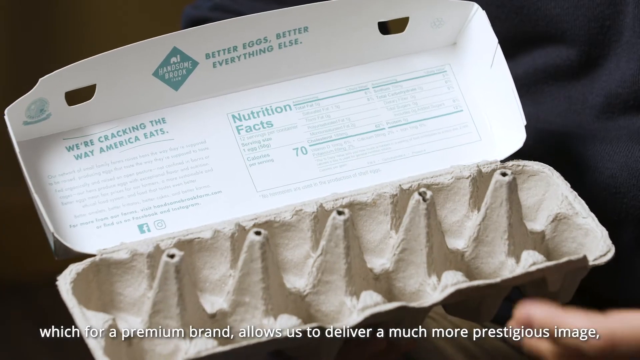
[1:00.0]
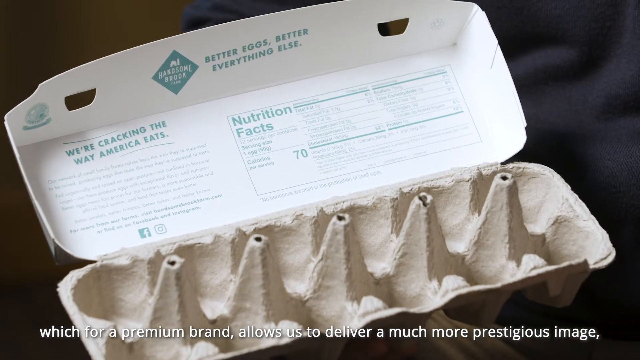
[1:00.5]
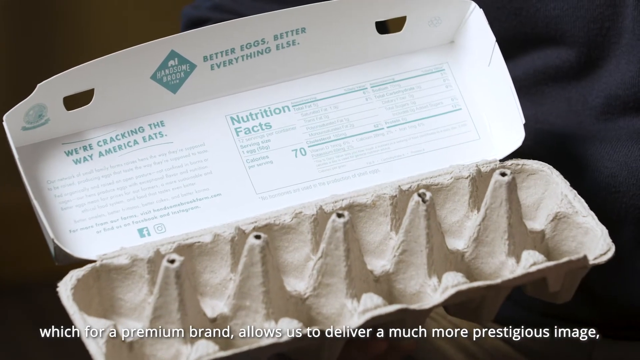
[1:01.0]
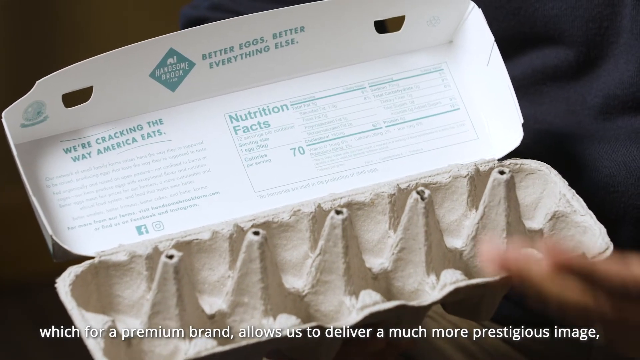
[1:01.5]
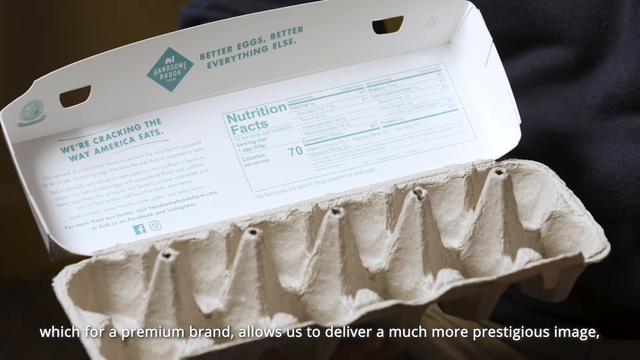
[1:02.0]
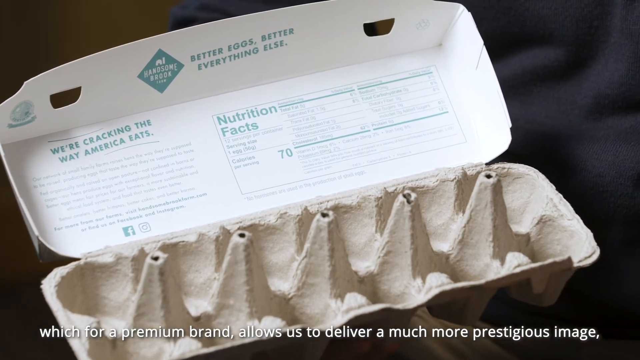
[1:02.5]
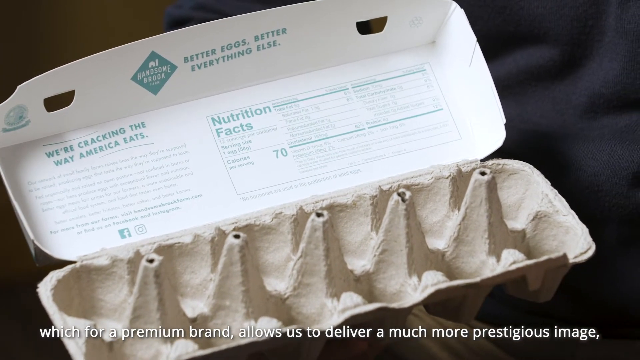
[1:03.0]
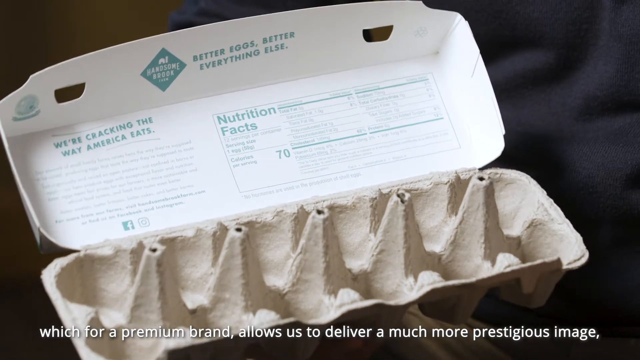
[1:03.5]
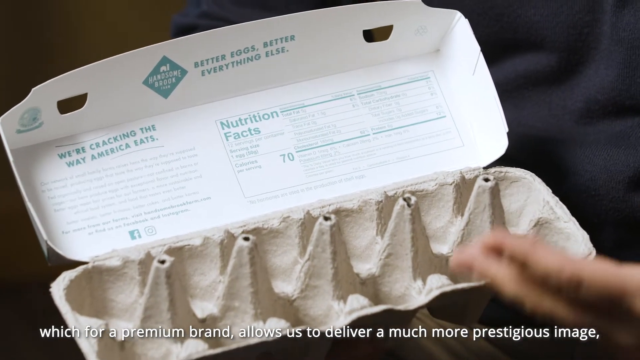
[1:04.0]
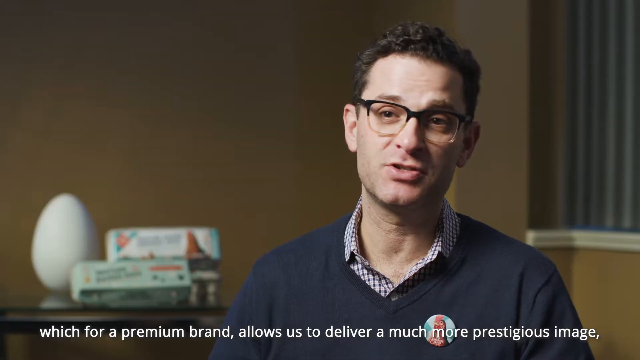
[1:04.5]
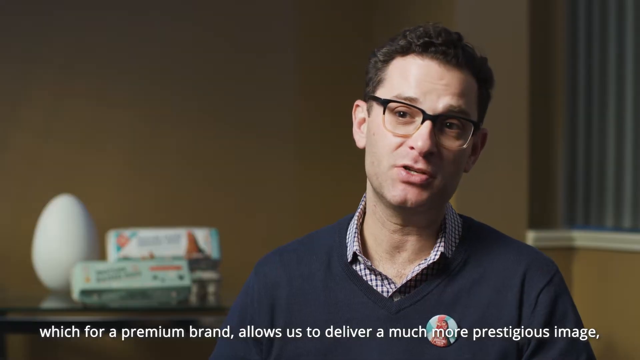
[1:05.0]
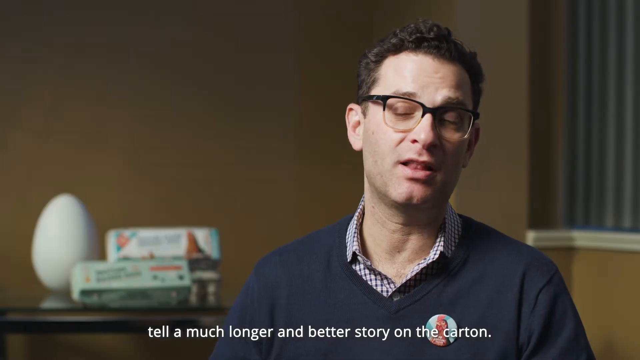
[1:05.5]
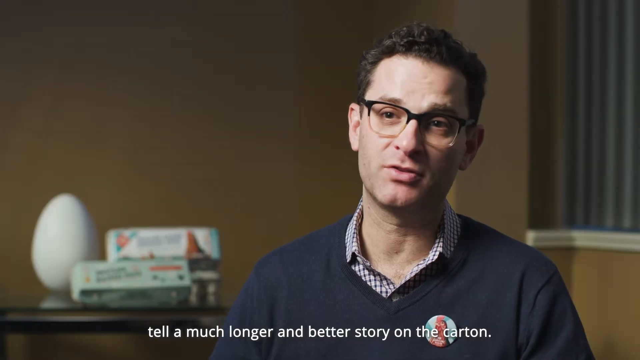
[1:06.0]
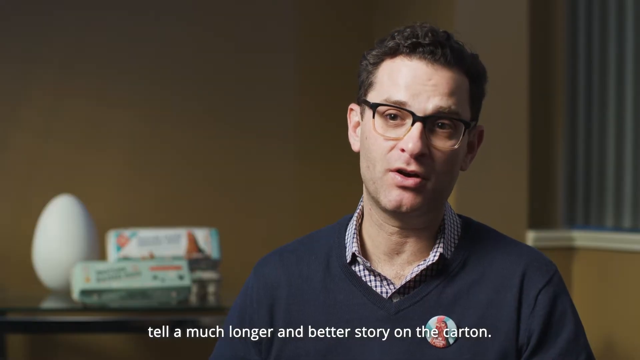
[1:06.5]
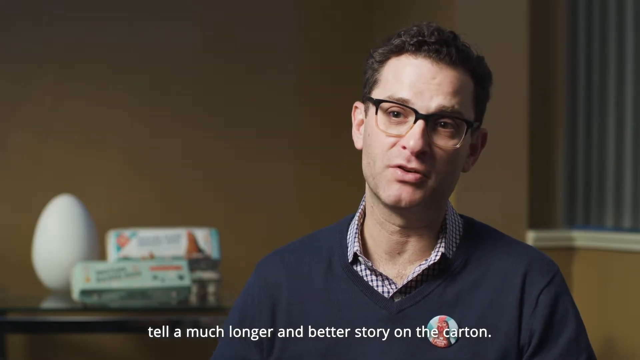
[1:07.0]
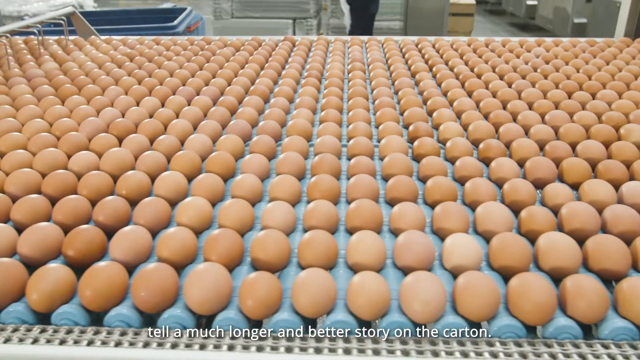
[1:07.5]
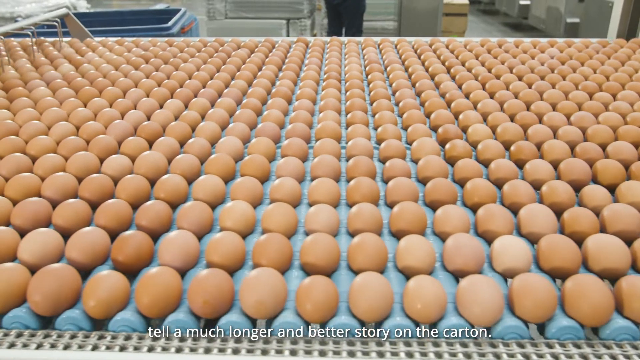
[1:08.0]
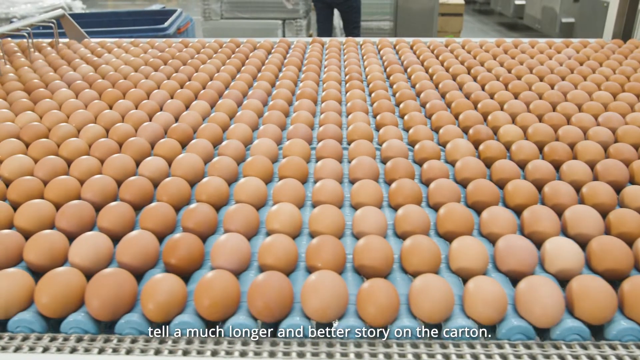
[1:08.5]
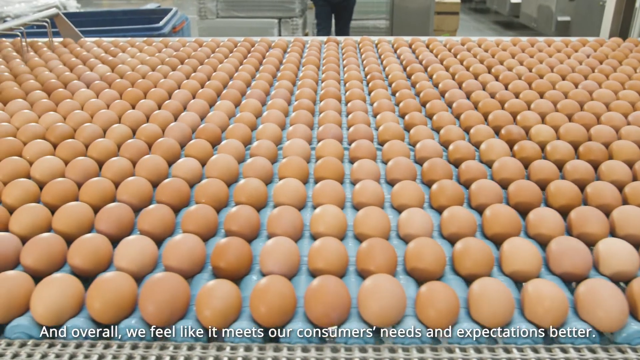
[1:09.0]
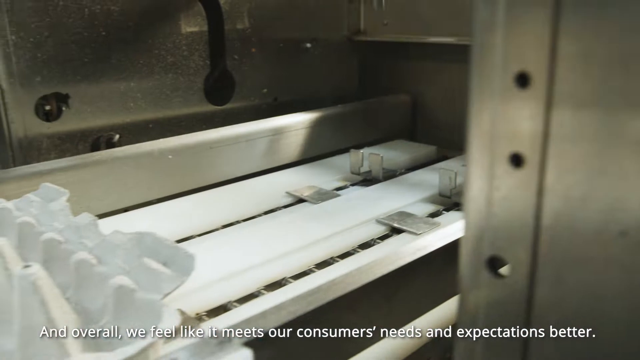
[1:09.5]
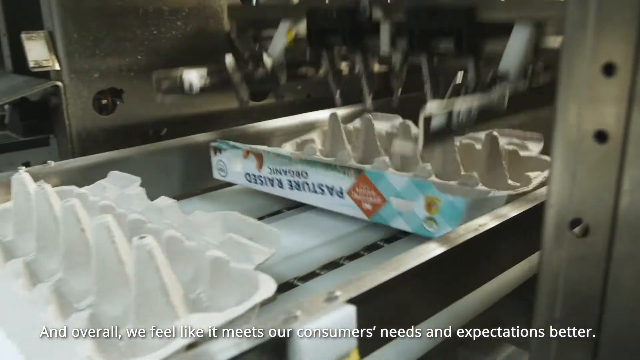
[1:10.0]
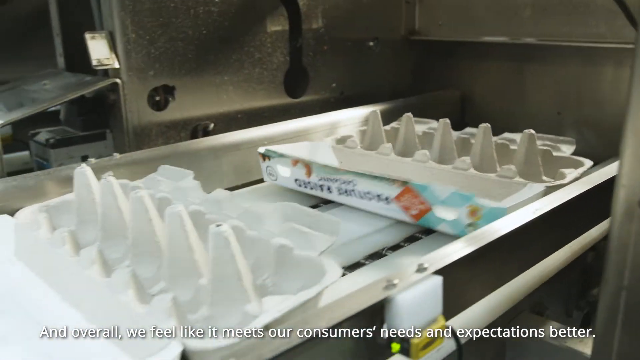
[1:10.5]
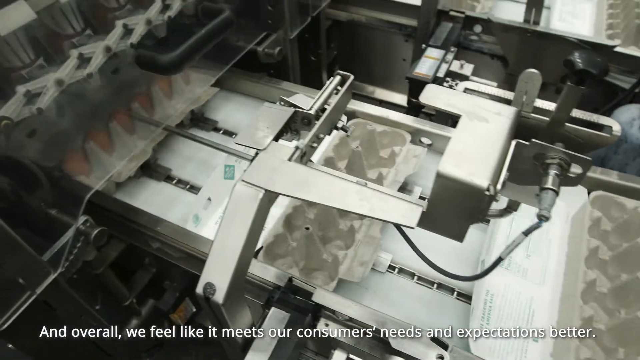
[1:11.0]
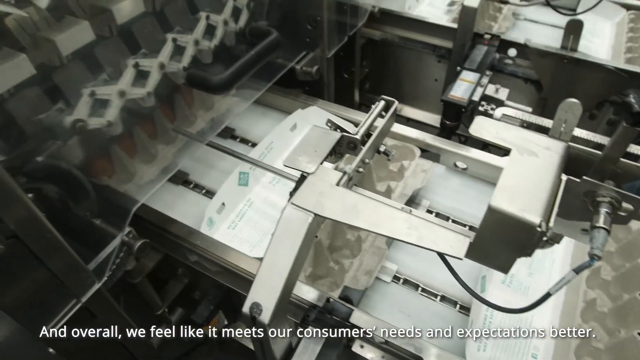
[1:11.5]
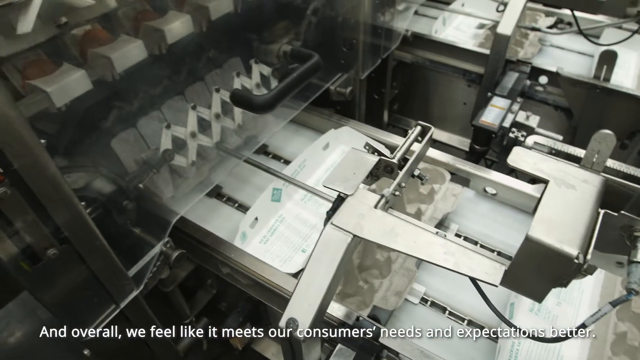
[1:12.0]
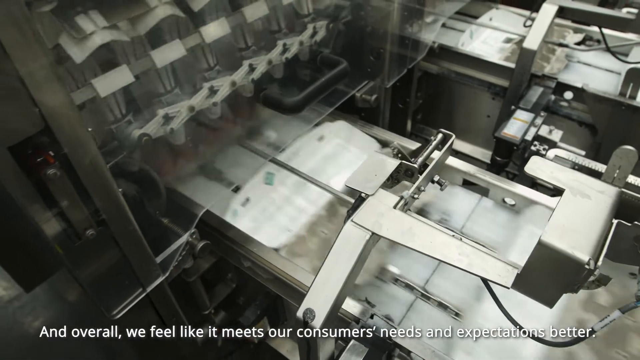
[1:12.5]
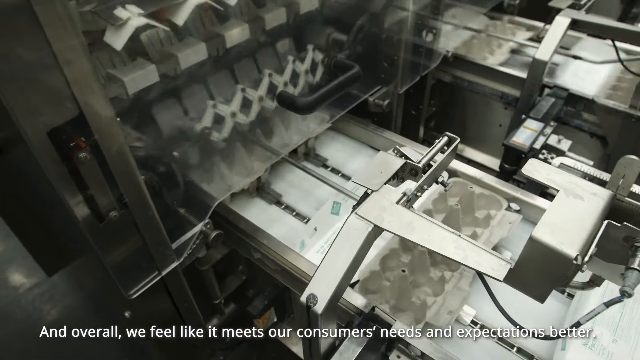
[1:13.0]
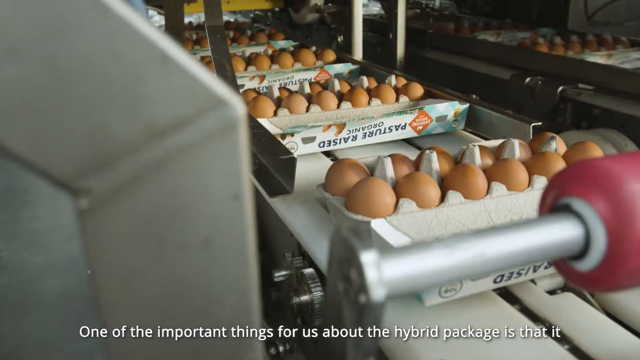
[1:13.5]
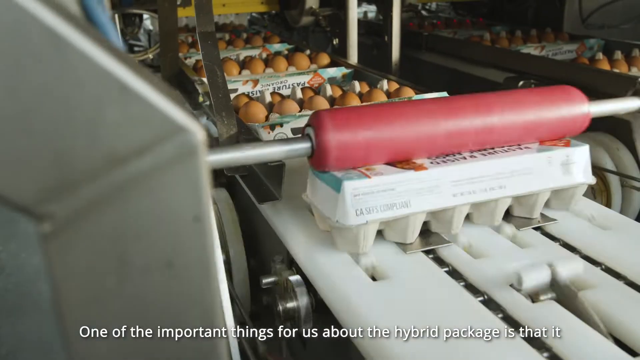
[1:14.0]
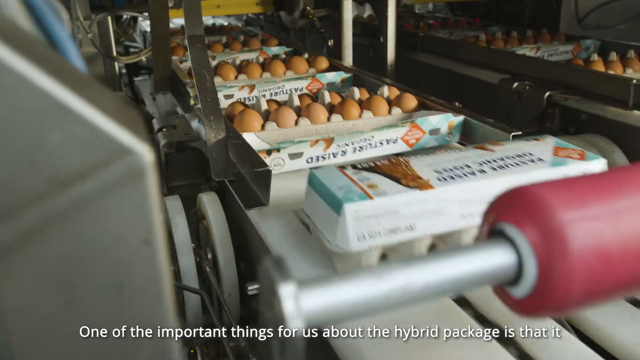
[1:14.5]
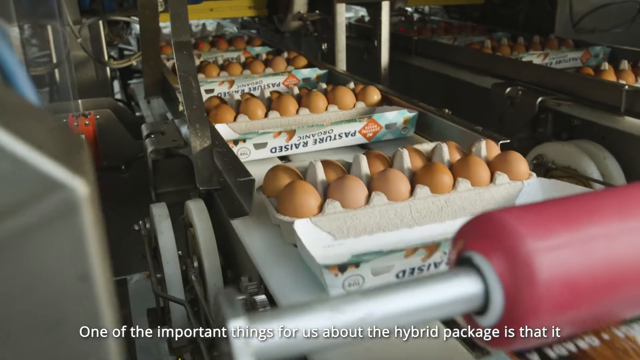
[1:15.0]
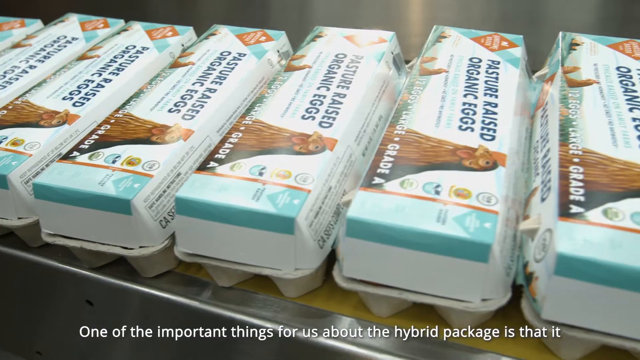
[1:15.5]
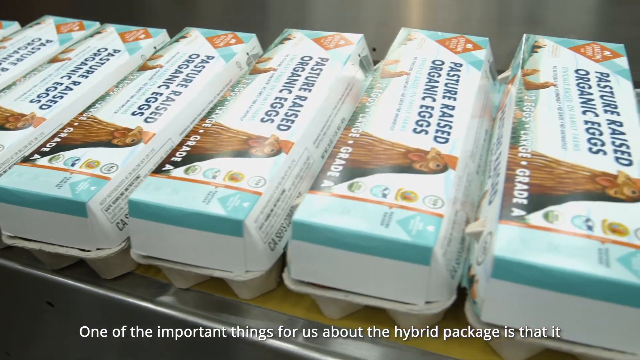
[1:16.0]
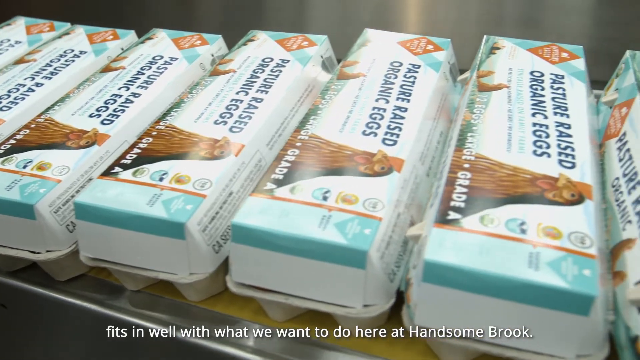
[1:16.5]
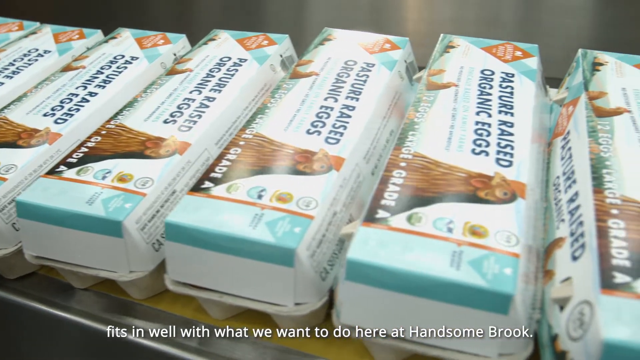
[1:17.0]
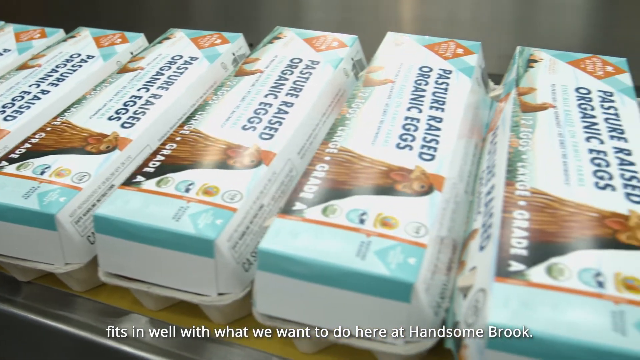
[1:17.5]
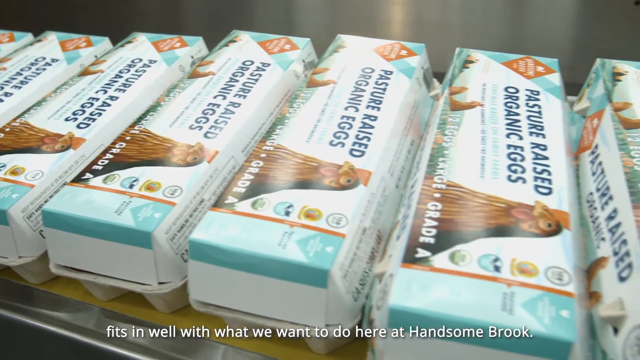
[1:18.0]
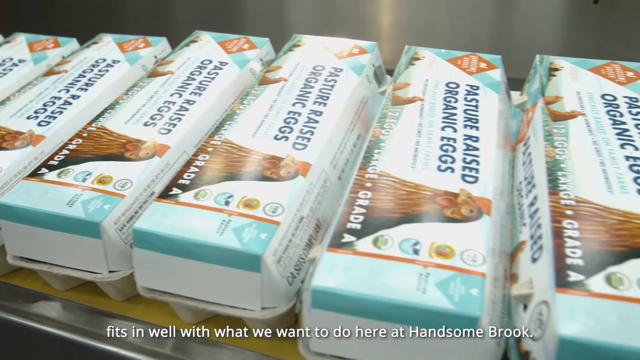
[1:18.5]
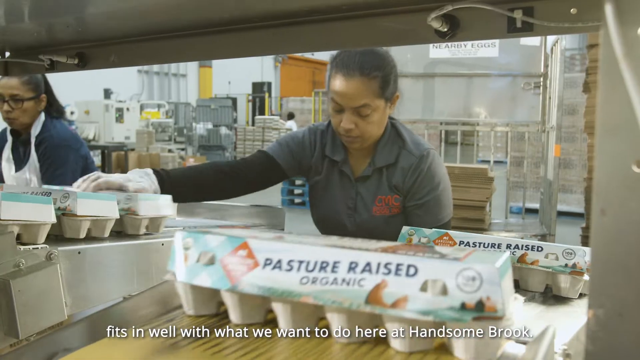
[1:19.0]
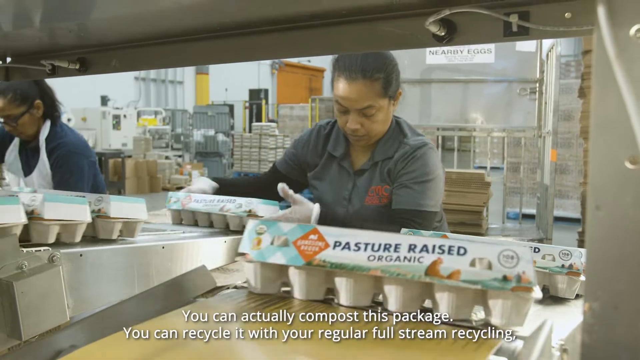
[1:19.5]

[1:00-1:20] Subtitles read: "which for a premium brand allows us to deliver a much more prestigious image, tell a much longer and better story on the carton. And overall, we feel like it meets our consumers' needs and expectations better. One of the important things for us about the hybrid package is that it fits in well with what we want to do here at Handsome Brook." In a close-up of an open egg box, the interviewee gestures with his hand. Writing on the inside of the box includes the nutrition facts and the slogans "better eggs, better everything else" and "we're cracking the way America eats." The video cuts back to the man's face as he is interviewed, then to rows and rows of eggs on a factory production line. A machine in a factory puts eggs into the egg boxes and closes them, and the filled boxes roll past on a production line.